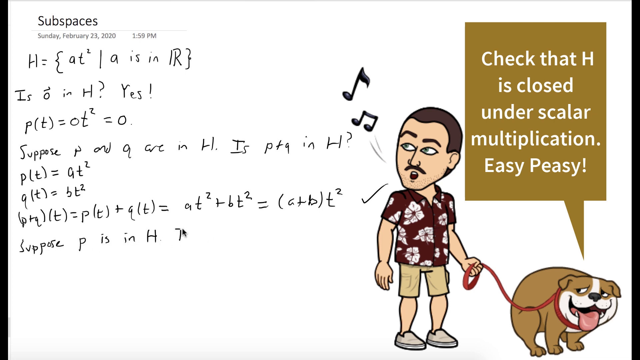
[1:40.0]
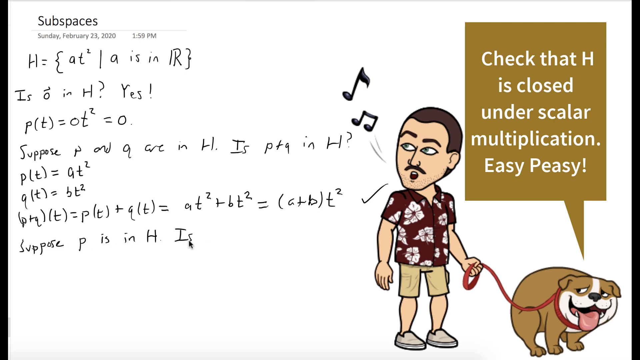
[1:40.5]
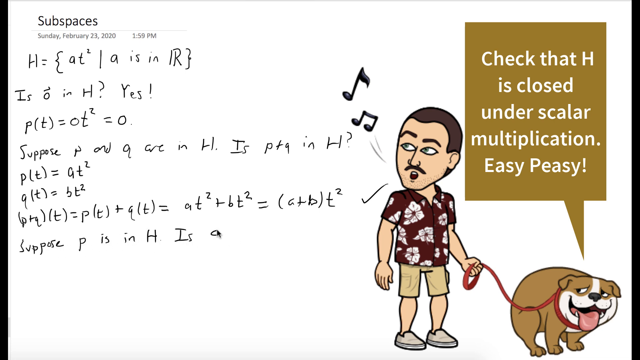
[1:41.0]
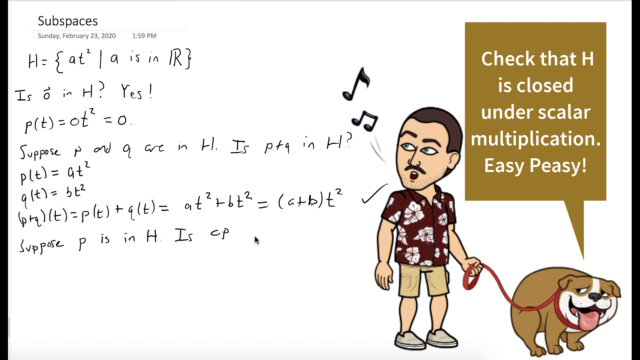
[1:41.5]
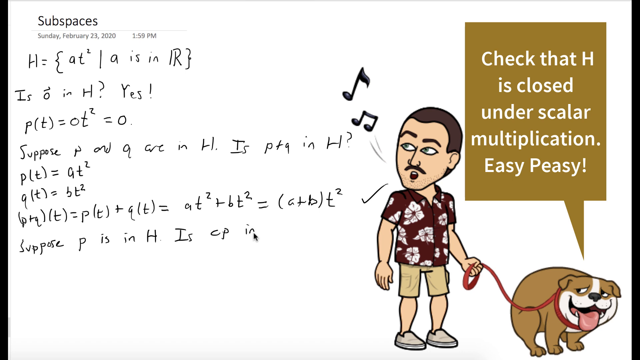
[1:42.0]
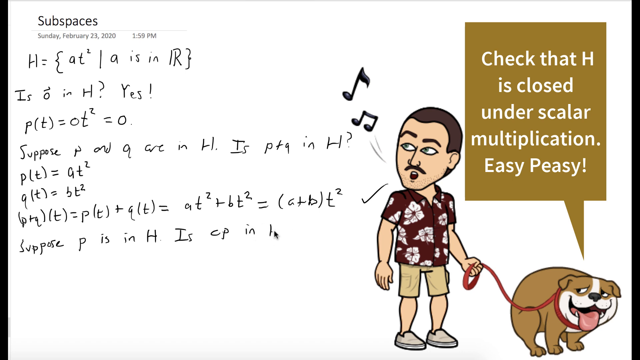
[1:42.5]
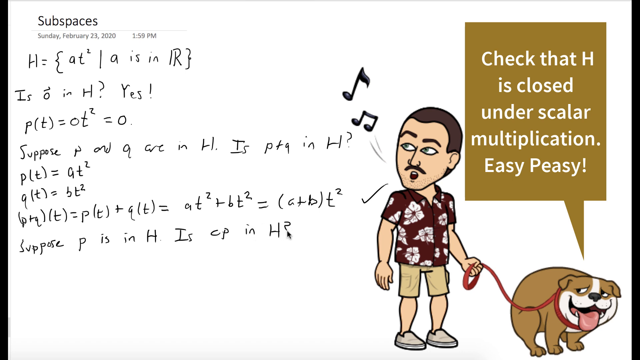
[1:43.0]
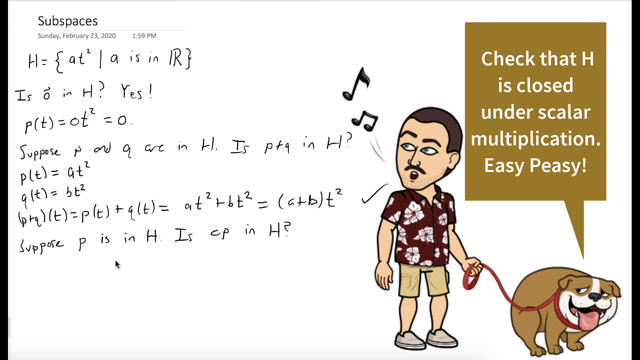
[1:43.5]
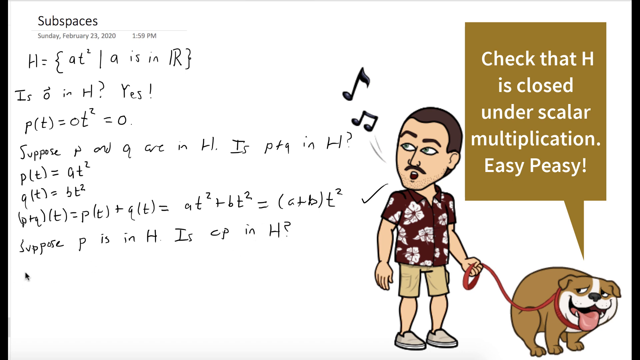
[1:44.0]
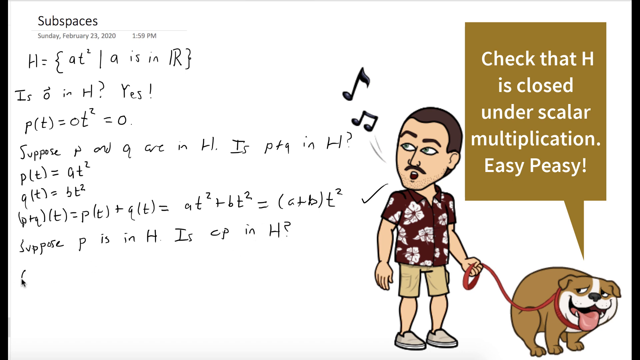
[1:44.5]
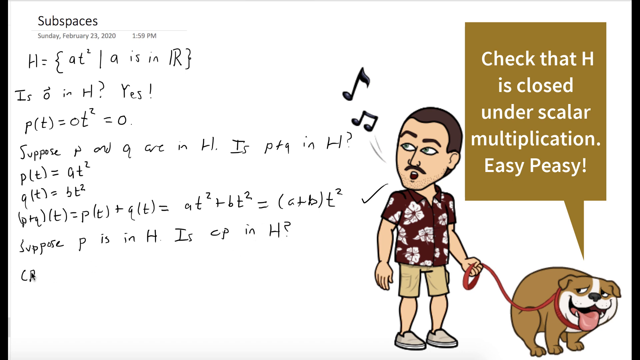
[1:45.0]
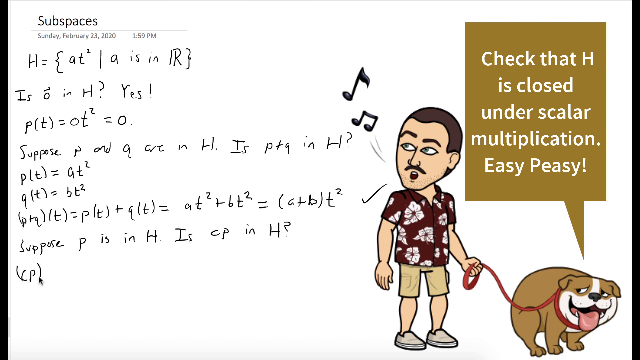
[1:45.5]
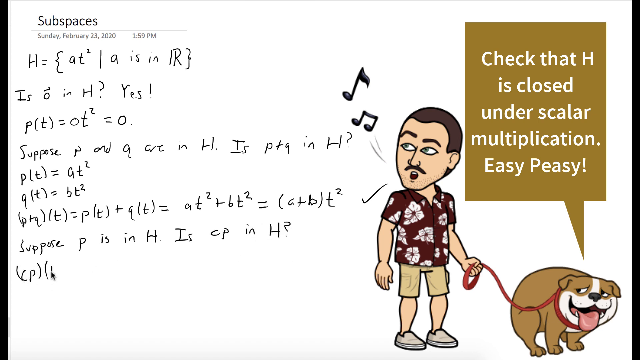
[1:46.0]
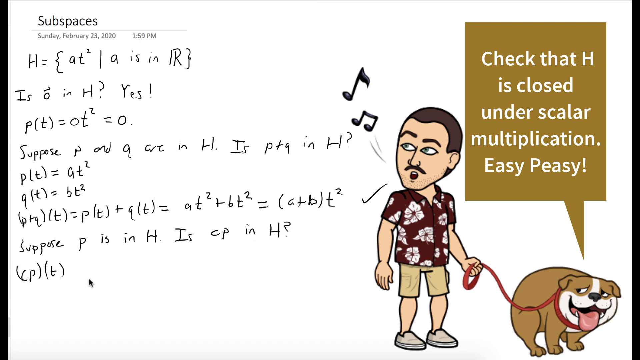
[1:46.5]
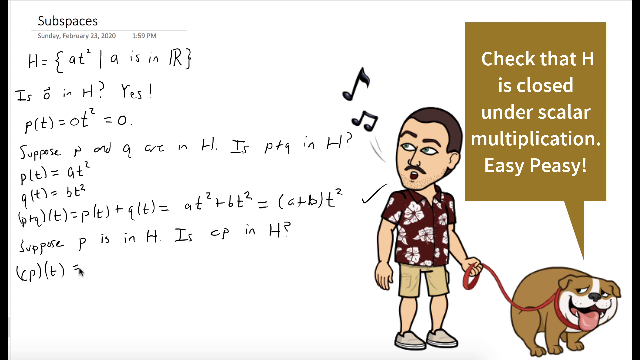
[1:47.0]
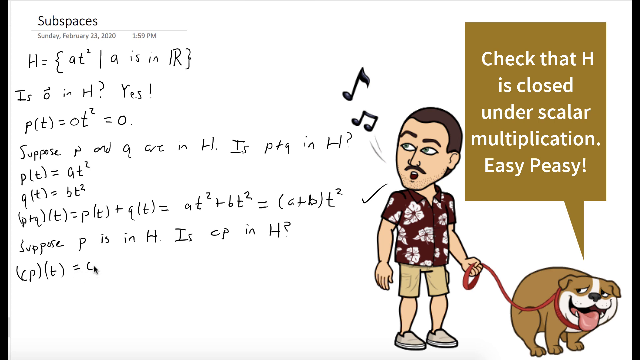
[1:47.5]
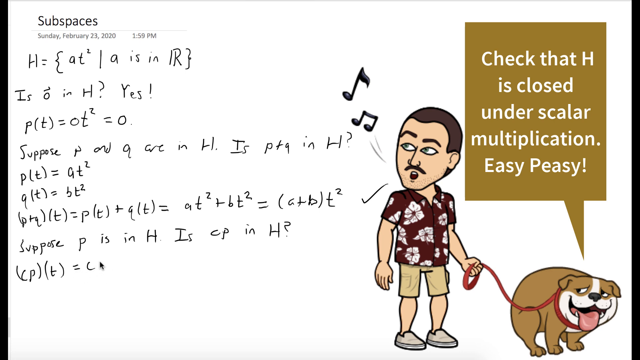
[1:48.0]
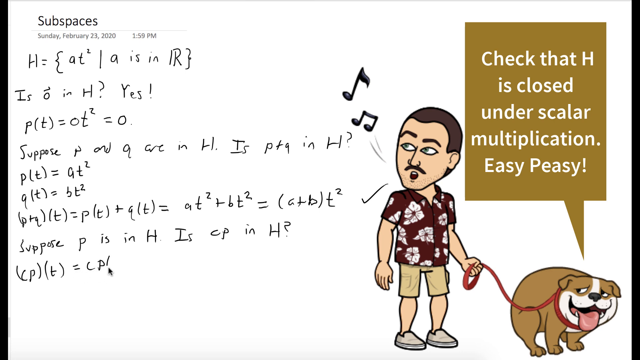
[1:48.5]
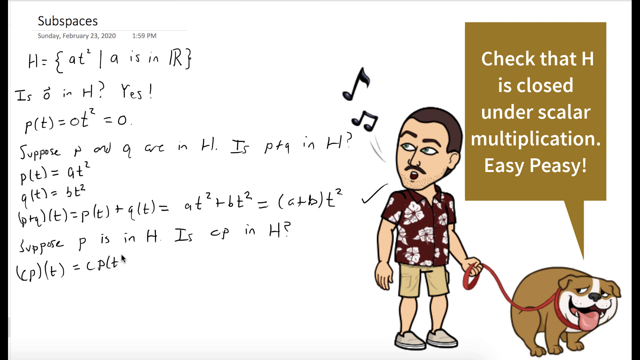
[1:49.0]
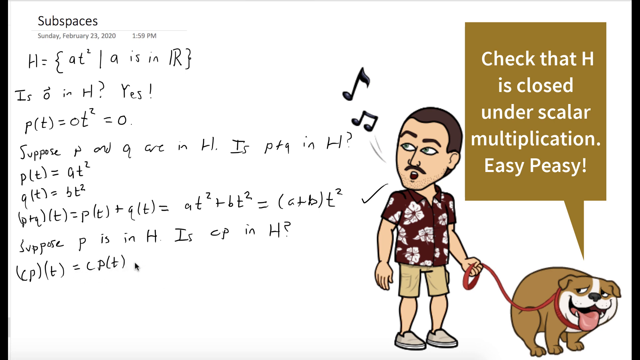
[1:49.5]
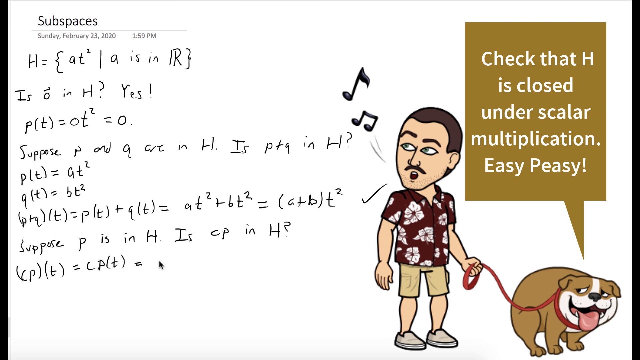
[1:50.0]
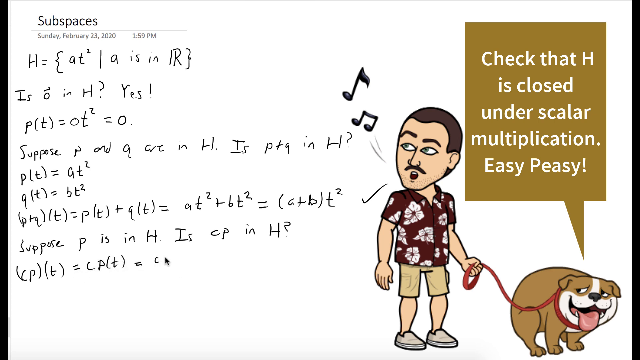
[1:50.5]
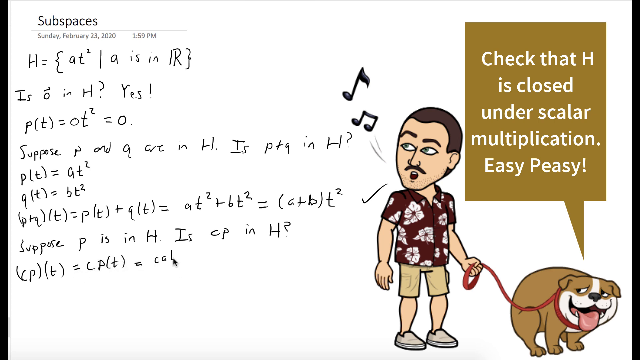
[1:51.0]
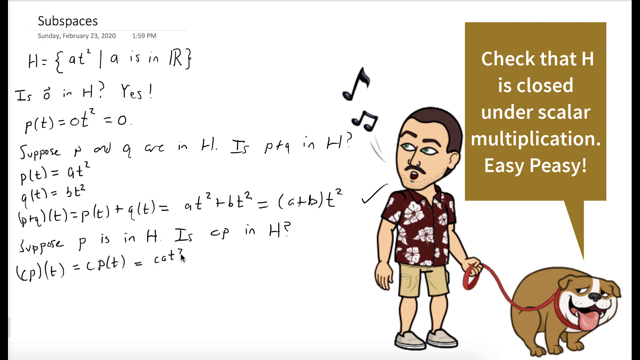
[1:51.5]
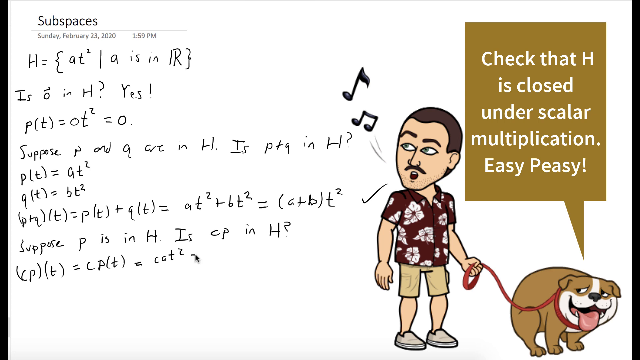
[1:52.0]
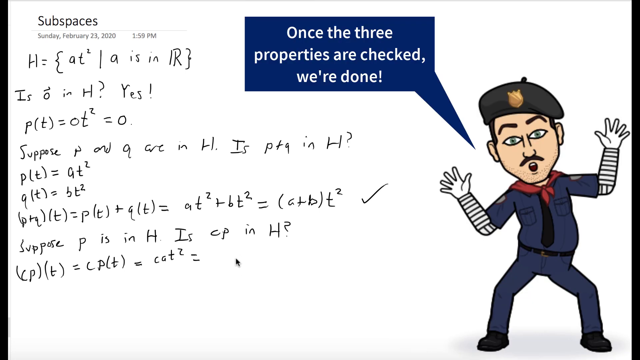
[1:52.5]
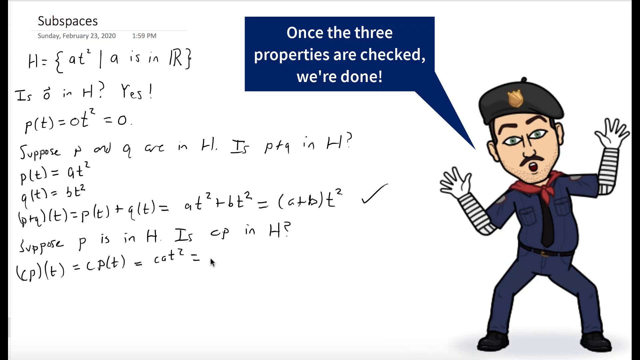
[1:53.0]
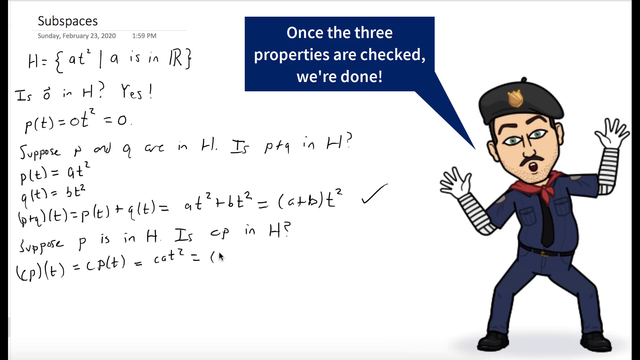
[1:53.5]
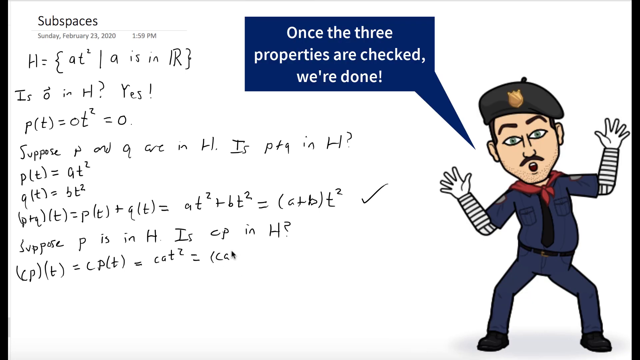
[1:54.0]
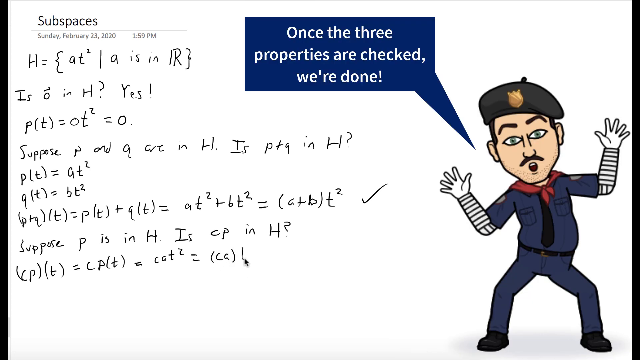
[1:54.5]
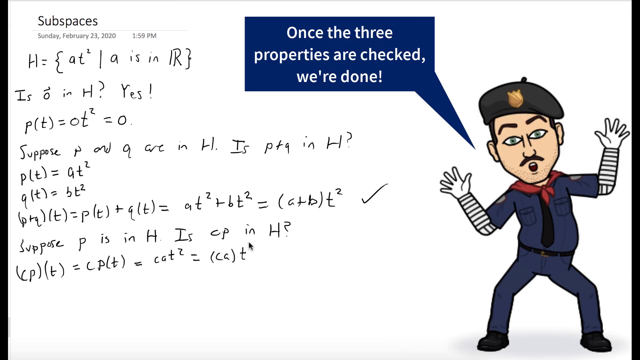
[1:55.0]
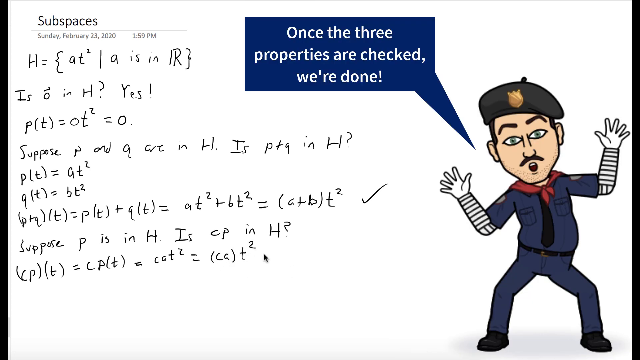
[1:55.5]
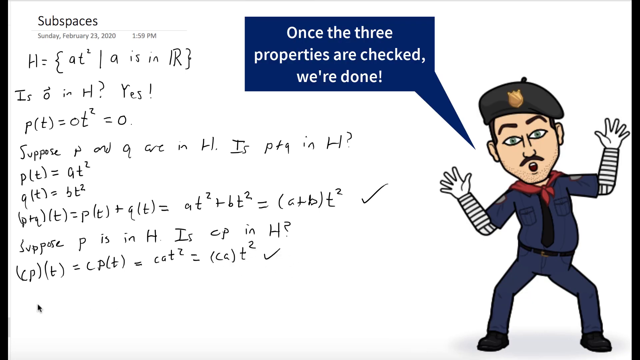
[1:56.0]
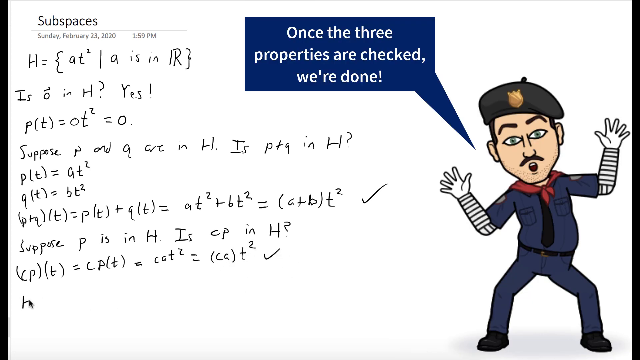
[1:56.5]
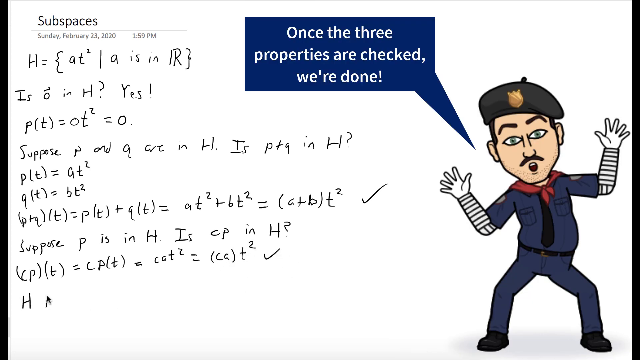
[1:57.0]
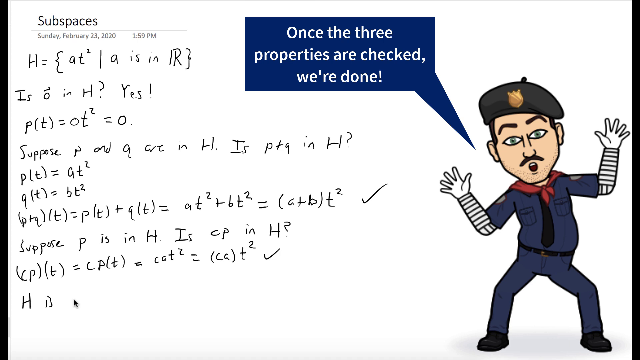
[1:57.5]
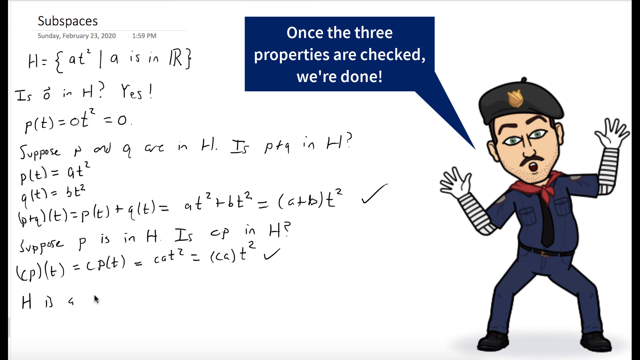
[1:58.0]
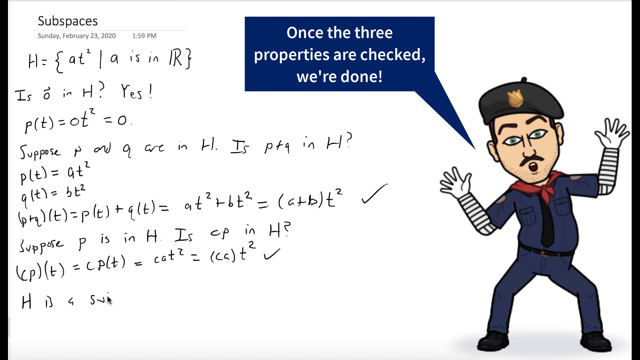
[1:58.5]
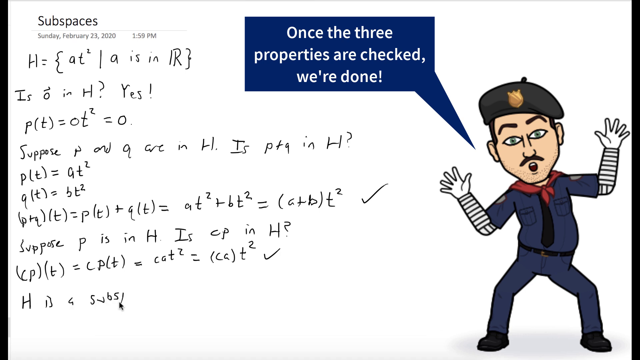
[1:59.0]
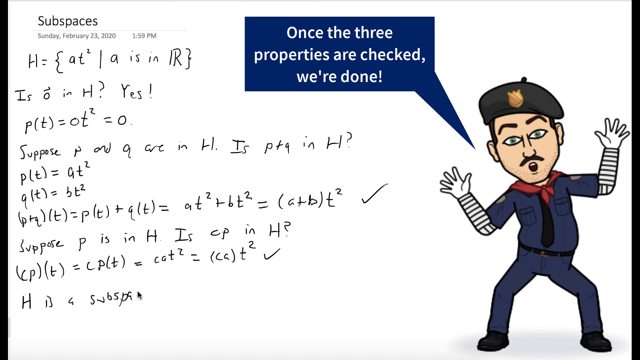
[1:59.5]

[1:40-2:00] The cartoon man in the burgundy shirt with white Hawaiian flowers and khaki pants walks the brown bulldog with a white face. The image quickly switches to the cartoon man dressed like a mime or an officer, or both. He wears a blue uniform with a red handkerchief tied around his neck, a black and white striped shirt underneath the uniform, and blue jeans below, and he appears to be in a "look at me" stance. His hat is black with a badge in the center, and his face appears shocked. A blue chat bubble next to him states "once the three properties are checked, we're done." The equation continues to be worked out in the writing space on the left-hand side of the screen.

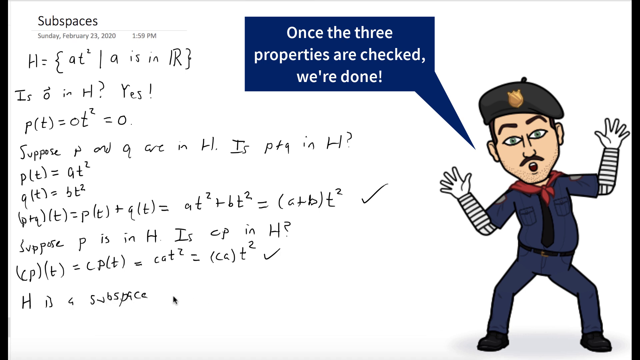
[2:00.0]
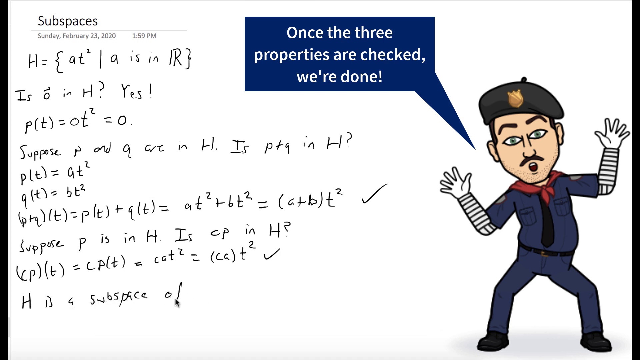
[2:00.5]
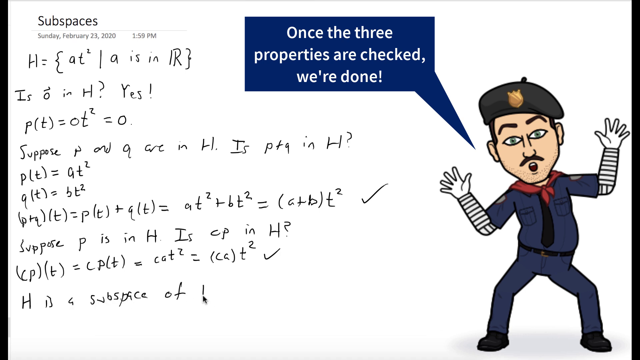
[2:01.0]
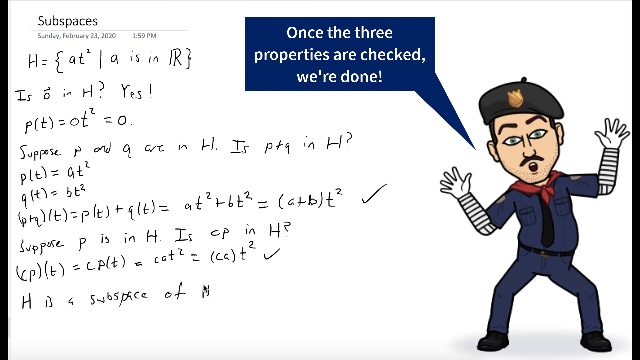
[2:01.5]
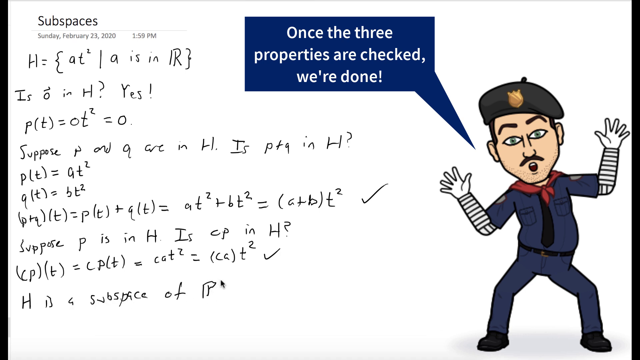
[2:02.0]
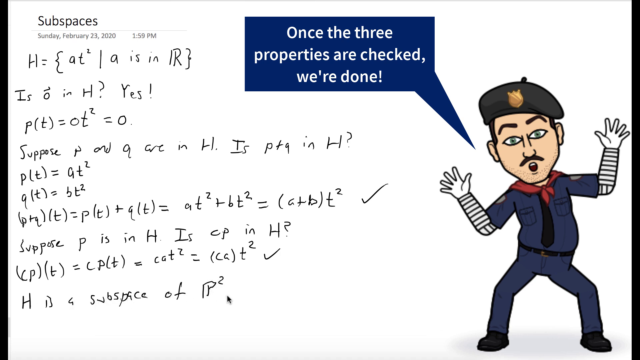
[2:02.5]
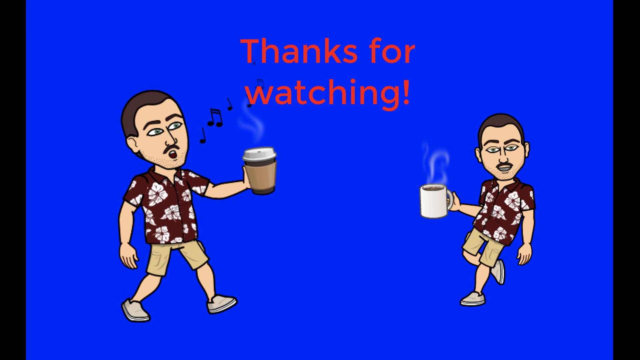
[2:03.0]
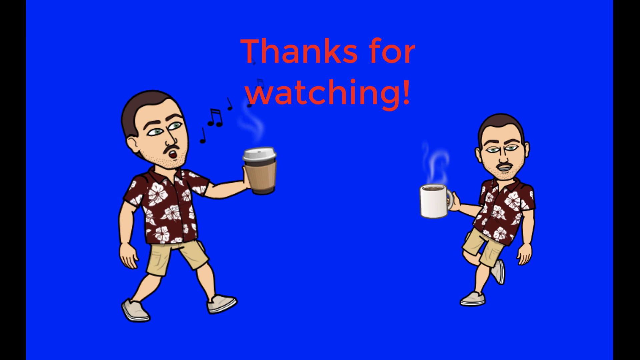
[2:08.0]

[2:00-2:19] The writing showing the work on the left side of the screen is finished. The screen then changes to blue, returning to the original screen, but this time red letters in the center say "thanks for watching!" On the left is a cartoon figure of a man with brown hair, a brown mustache, and slight stubble, humming a tune. He appears to be in a walking stance and wears a red shirt with white flowers, khaki shorts, and gray shoes, and he holds a single-use coffee cup with a hand protector. Across from him on the right is the same virtual character, who appears to be leaning against something. He stares directly at the viewer and holds in his right hand a white coffee mug with what appears to be coffee in it and steam rising above it.